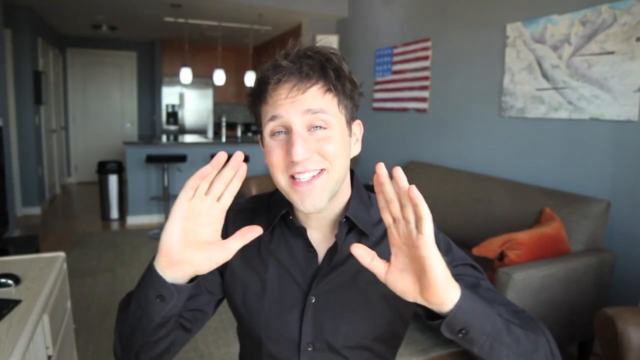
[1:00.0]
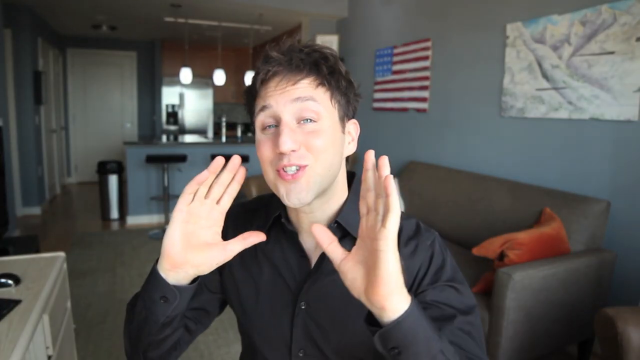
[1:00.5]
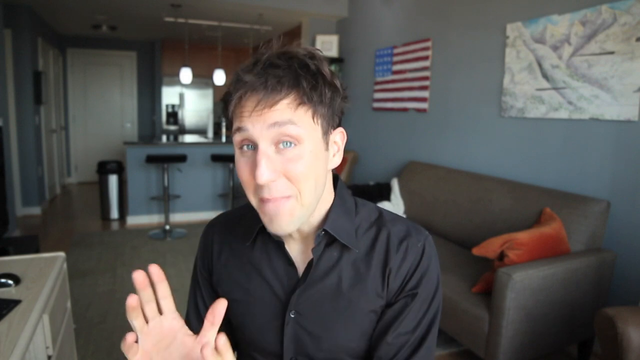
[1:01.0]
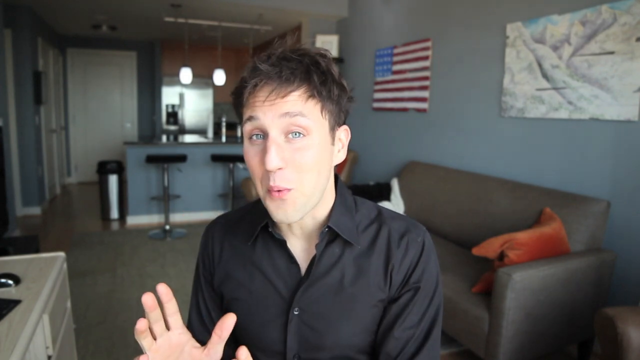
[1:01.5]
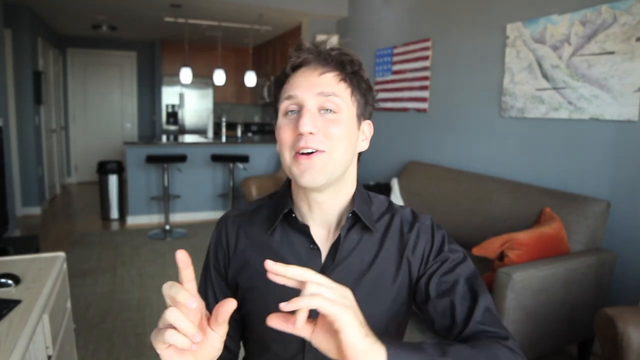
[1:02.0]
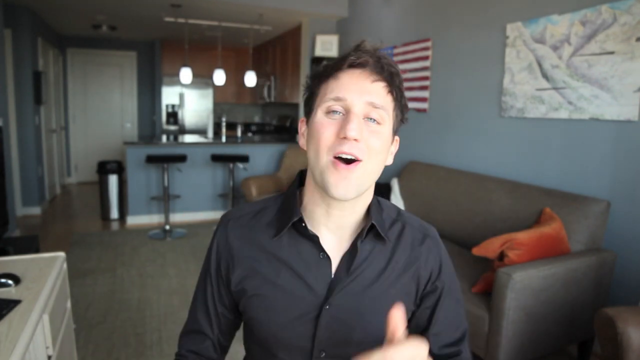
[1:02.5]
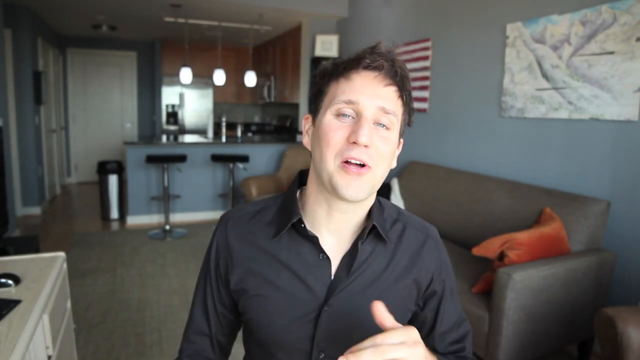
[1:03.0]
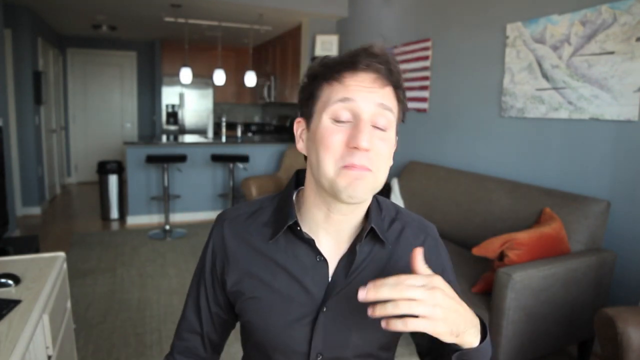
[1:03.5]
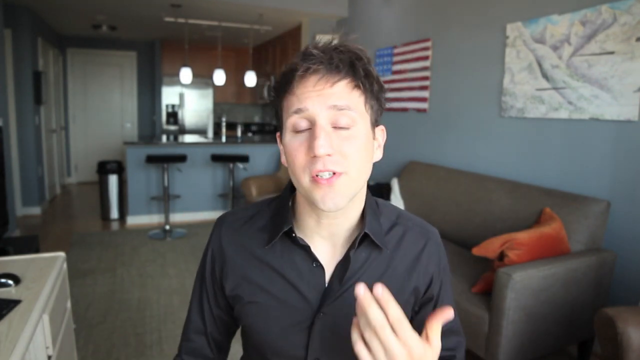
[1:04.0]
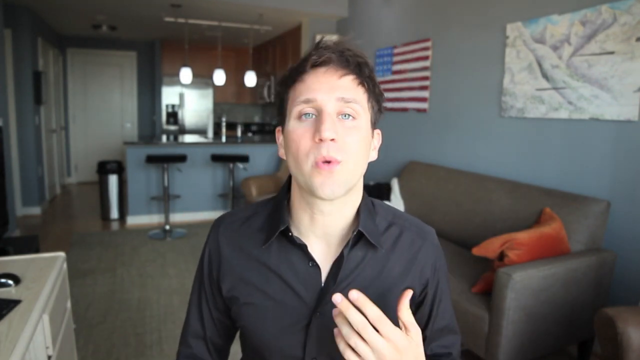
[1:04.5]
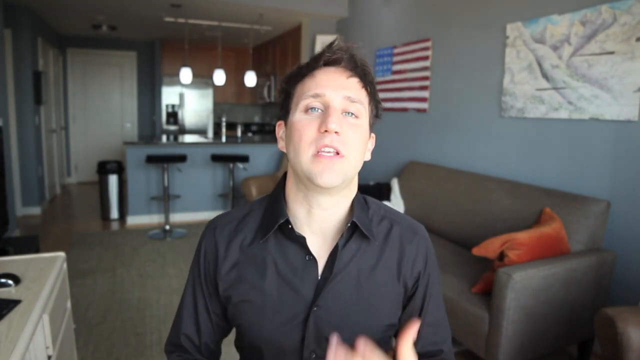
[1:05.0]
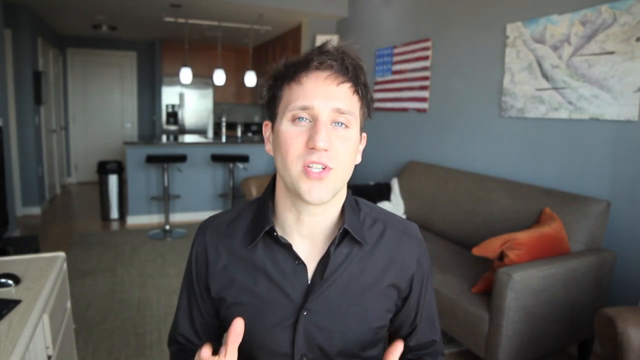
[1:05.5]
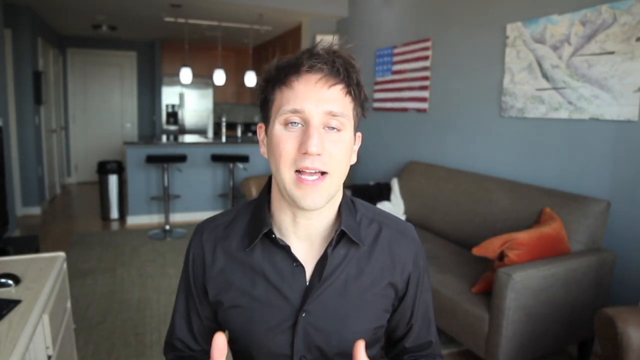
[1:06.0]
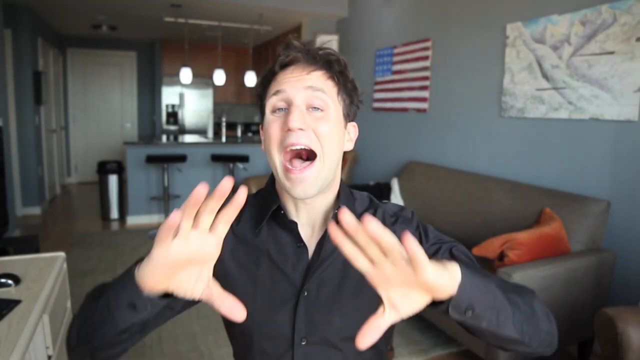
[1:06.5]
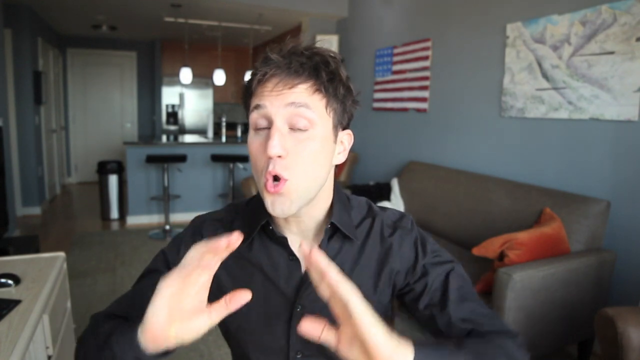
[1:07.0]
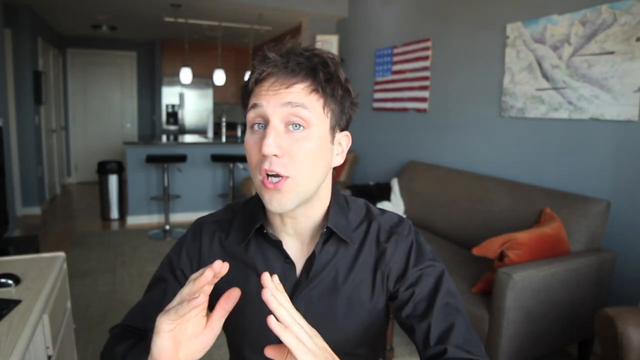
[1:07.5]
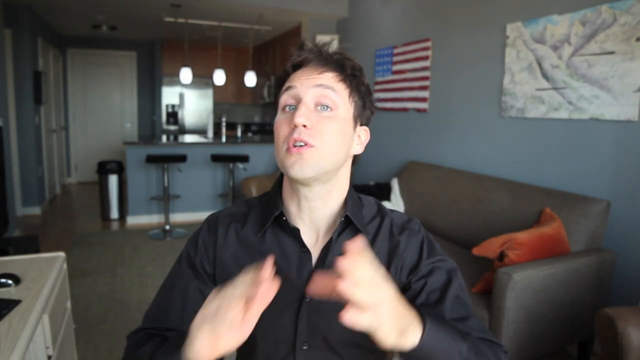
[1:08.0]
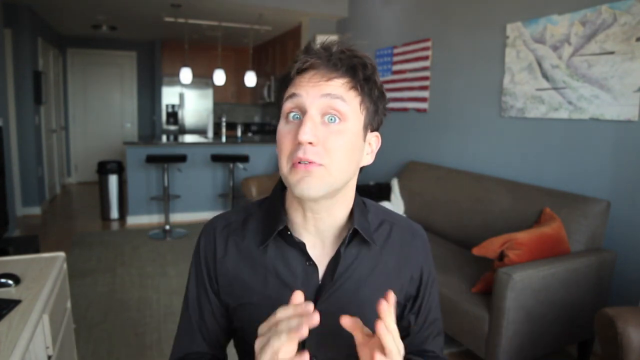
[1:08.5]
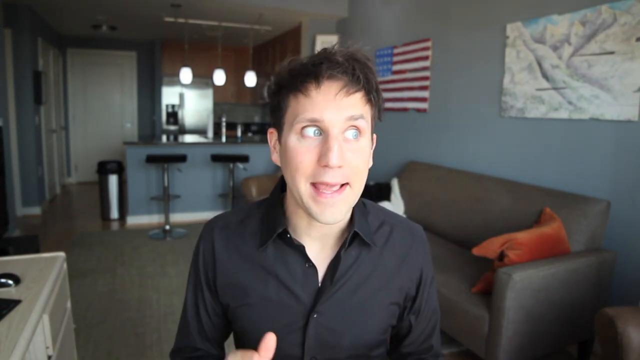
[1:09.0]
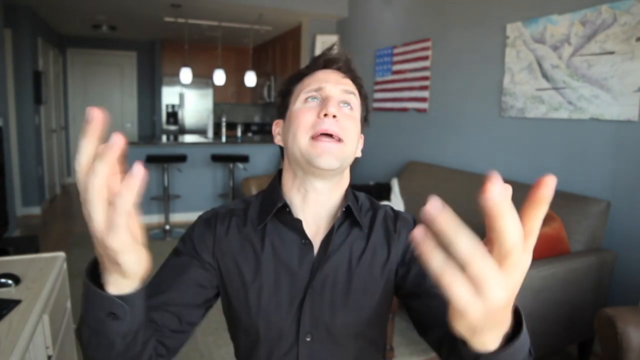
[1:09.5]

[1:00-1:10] The young man, possibly in his mid-twenties, gestures with his hands in front of the camera, seeming amused and smiling a bit as he tells a story. He is clean-shaven, with somewhat messy dark brown hair, and wears a black button-up shirt. He is in an apartment, likely his own. Behind him is a tan couch with an orange pillow, and on the wall above it are a picture of the American flag and a picture of a mountain range. His kitchen is visible at the back of the room.